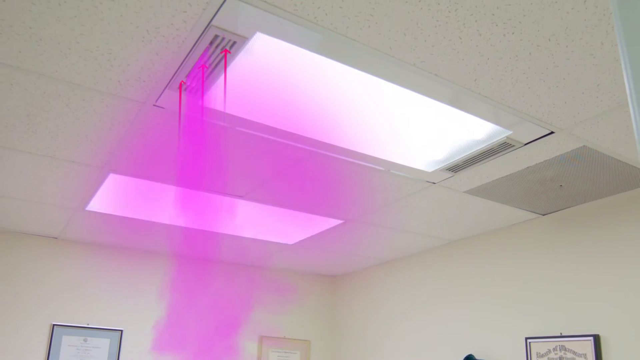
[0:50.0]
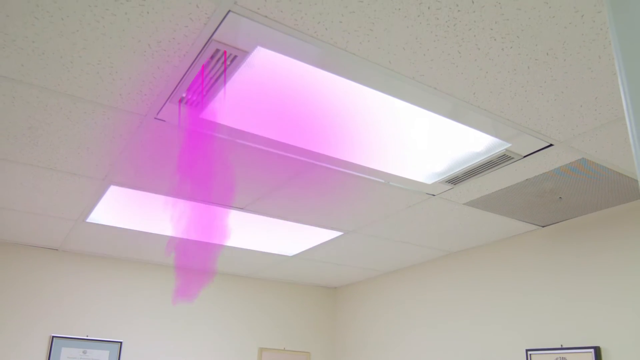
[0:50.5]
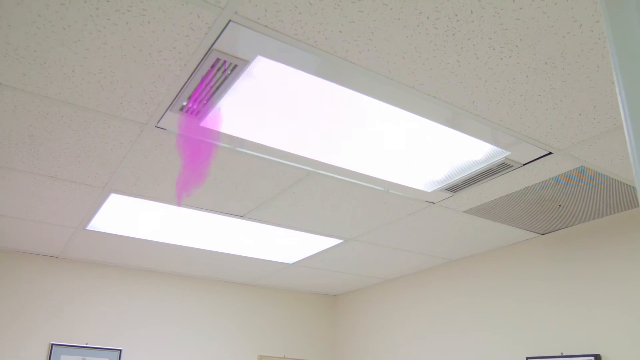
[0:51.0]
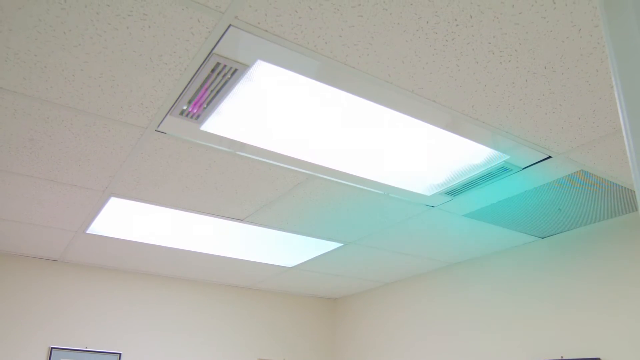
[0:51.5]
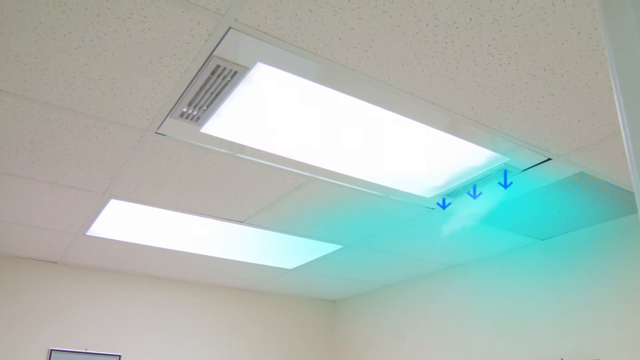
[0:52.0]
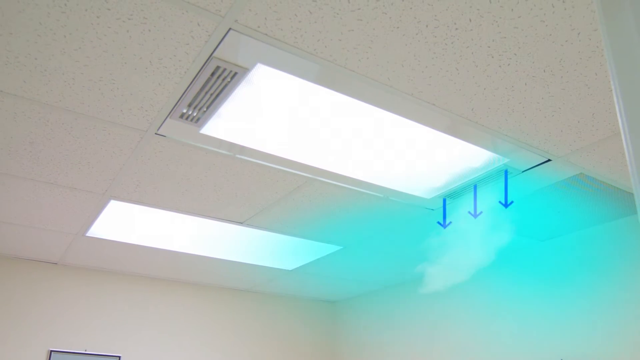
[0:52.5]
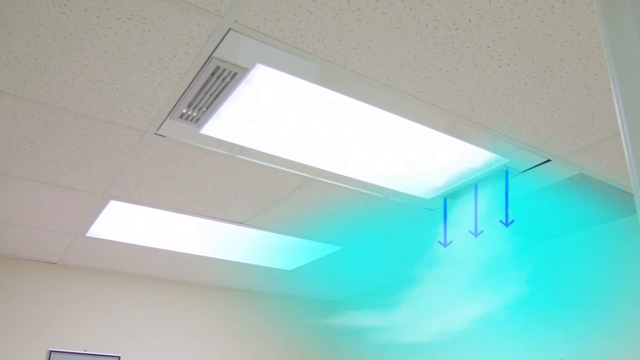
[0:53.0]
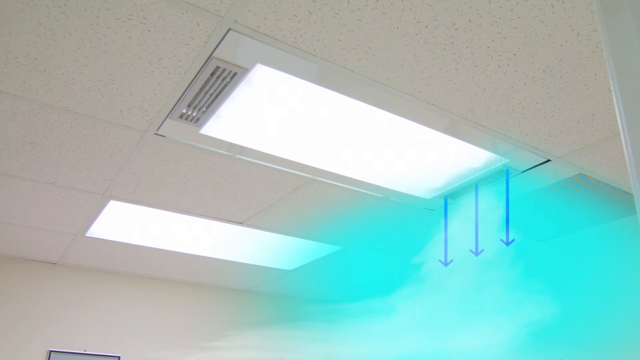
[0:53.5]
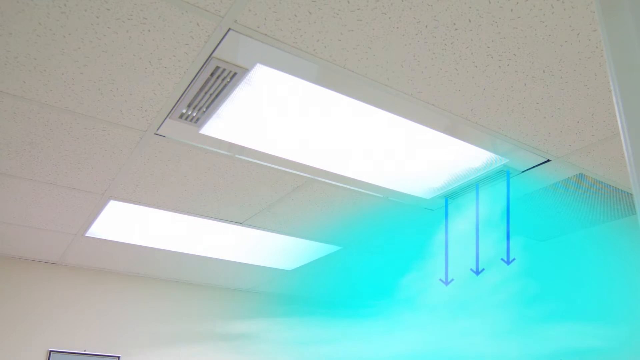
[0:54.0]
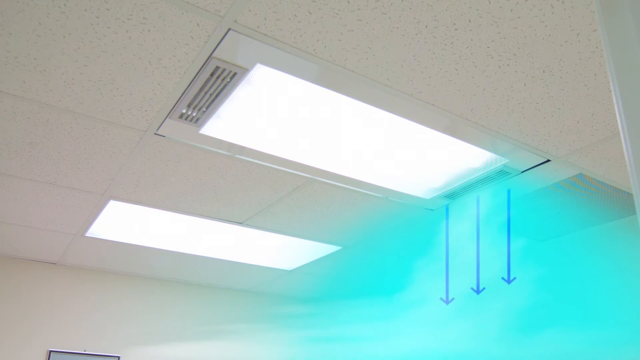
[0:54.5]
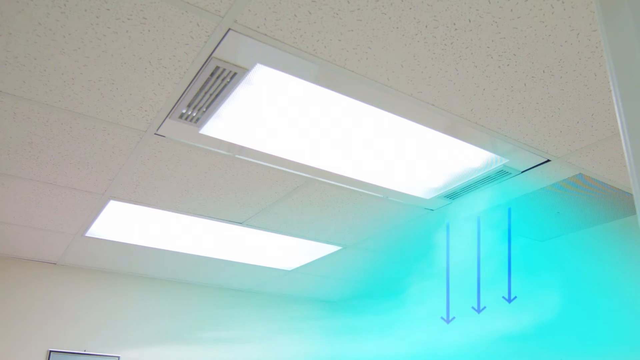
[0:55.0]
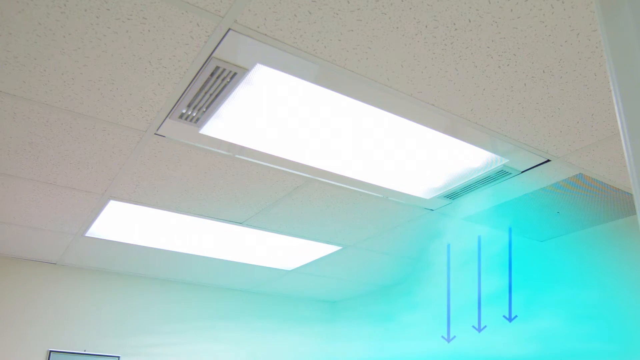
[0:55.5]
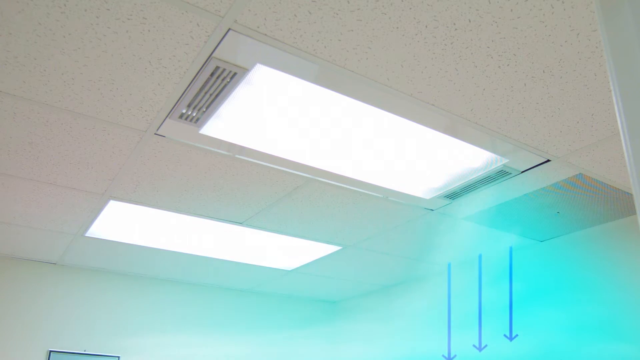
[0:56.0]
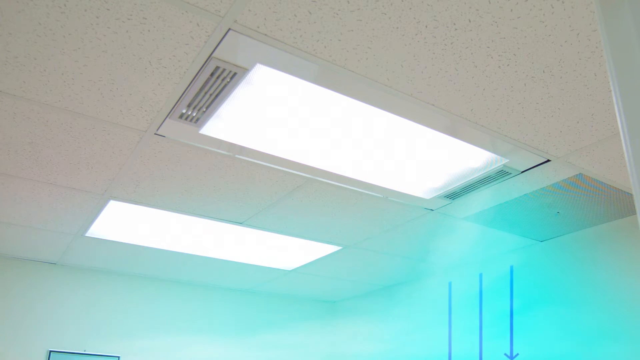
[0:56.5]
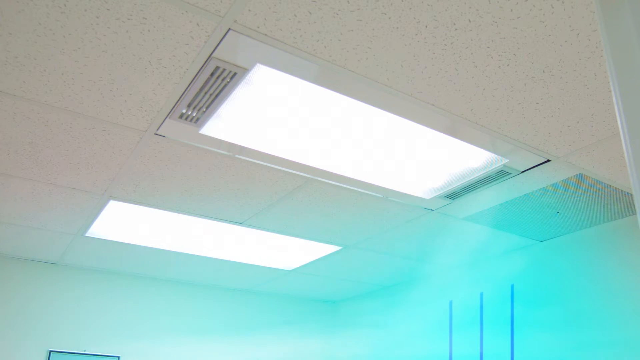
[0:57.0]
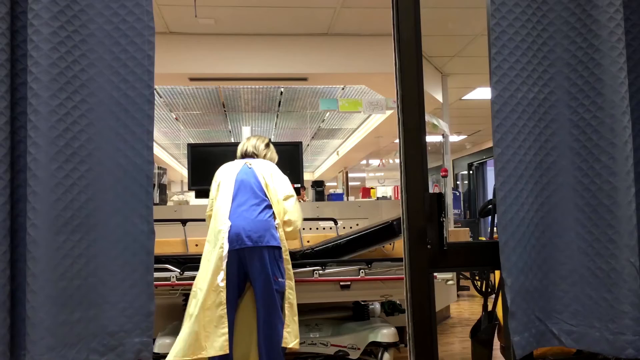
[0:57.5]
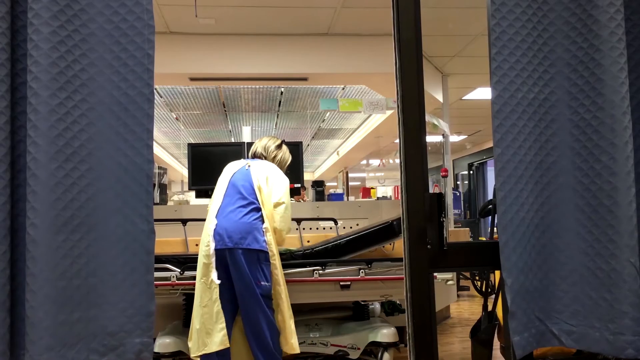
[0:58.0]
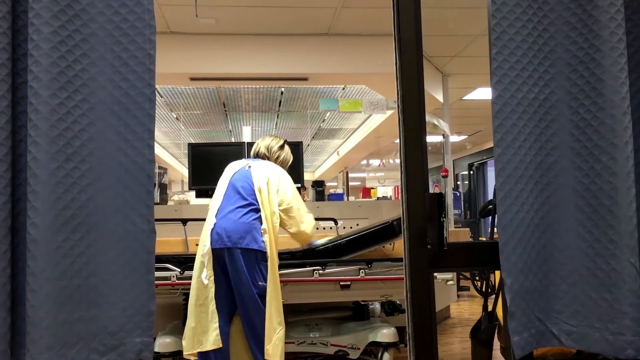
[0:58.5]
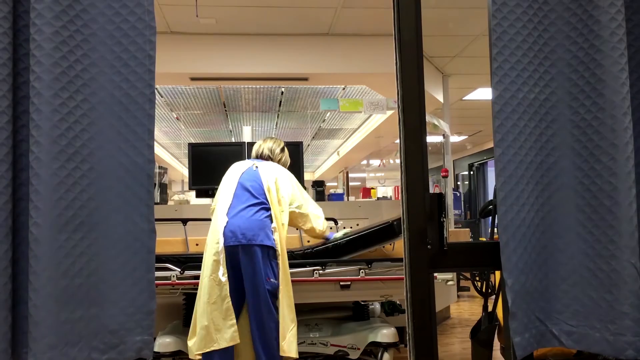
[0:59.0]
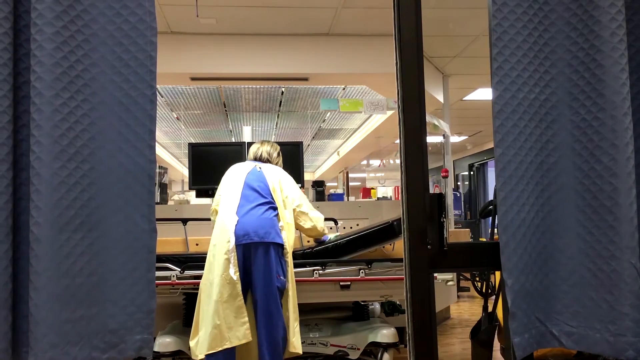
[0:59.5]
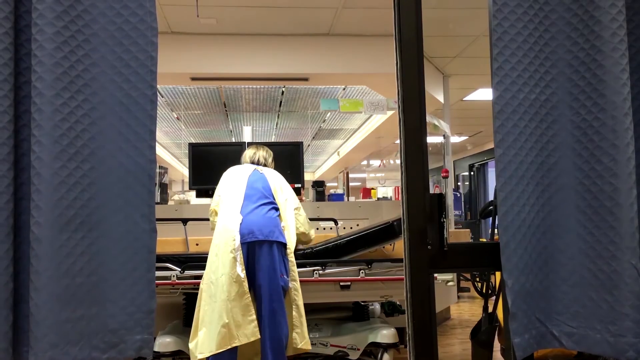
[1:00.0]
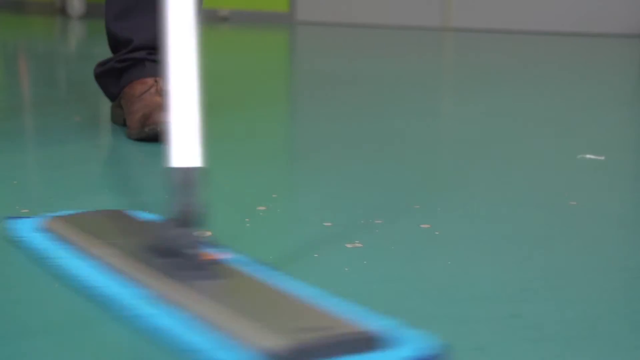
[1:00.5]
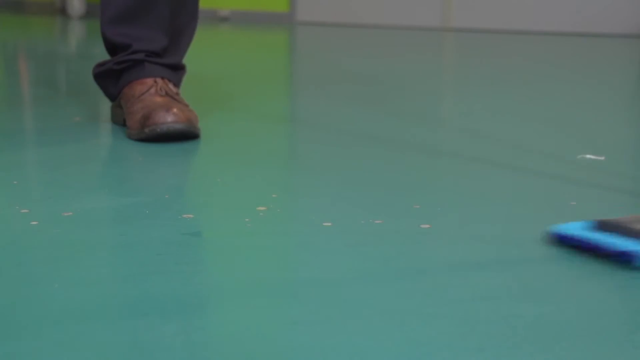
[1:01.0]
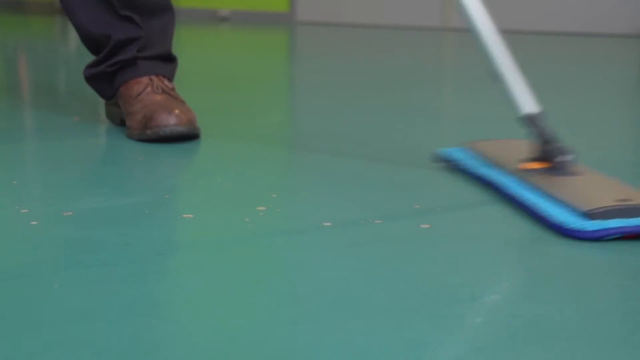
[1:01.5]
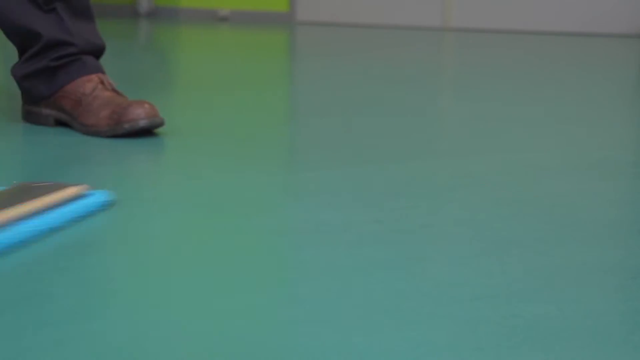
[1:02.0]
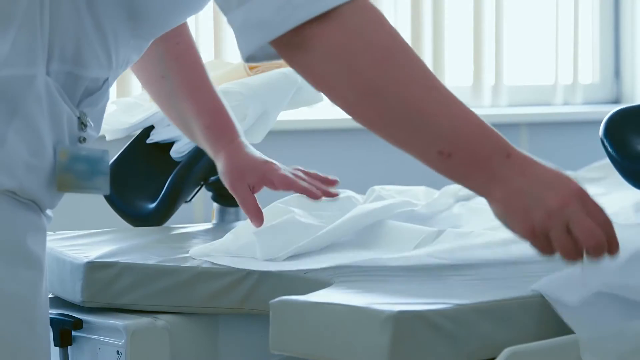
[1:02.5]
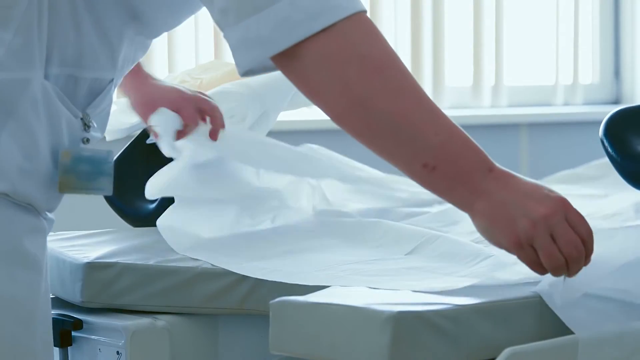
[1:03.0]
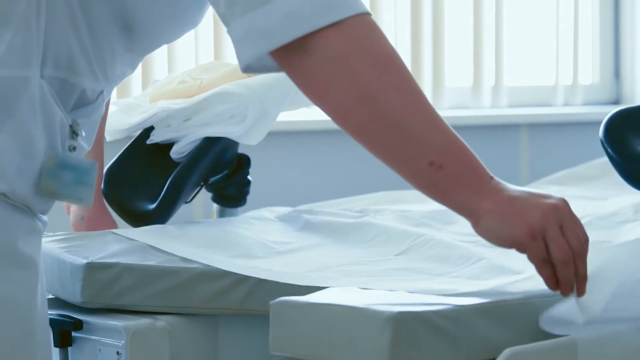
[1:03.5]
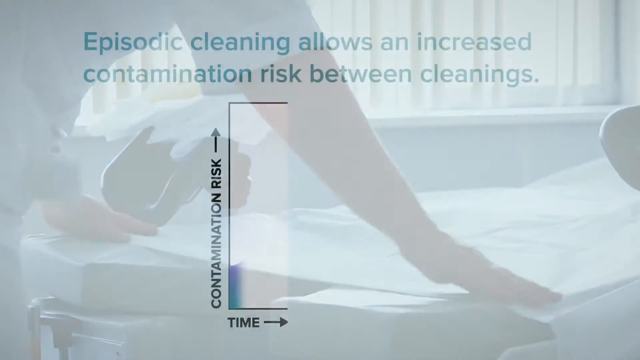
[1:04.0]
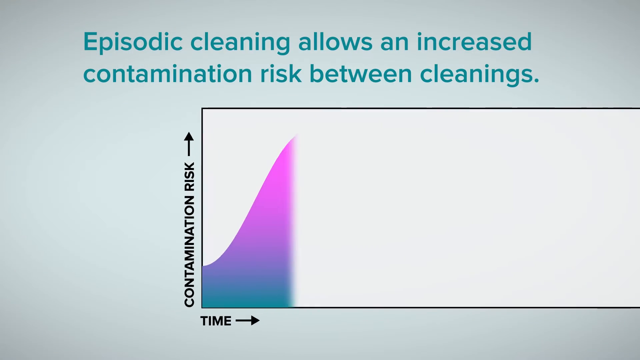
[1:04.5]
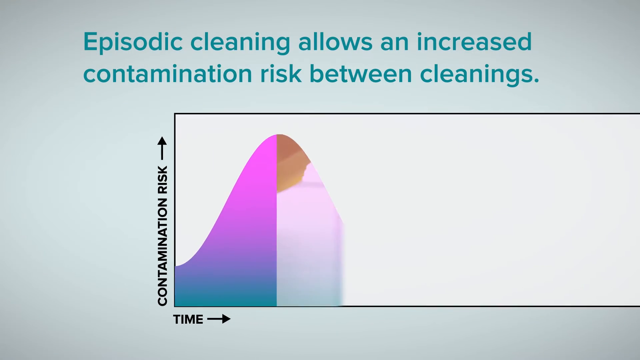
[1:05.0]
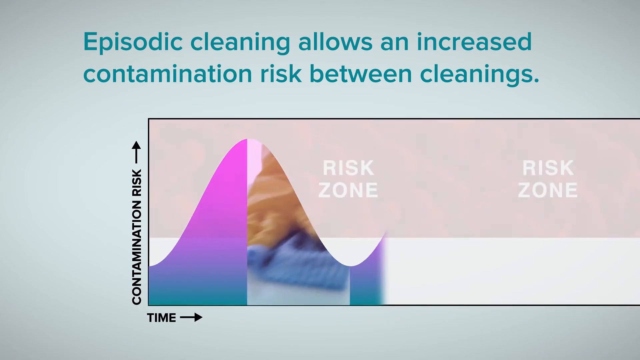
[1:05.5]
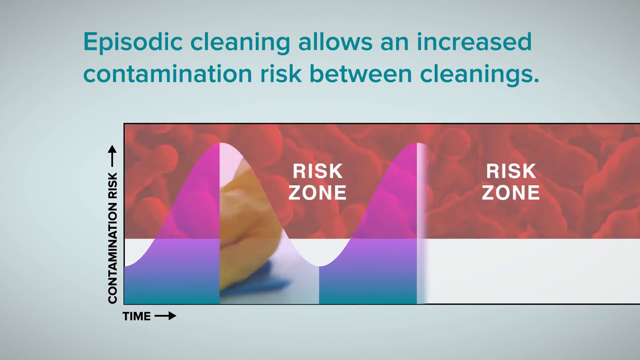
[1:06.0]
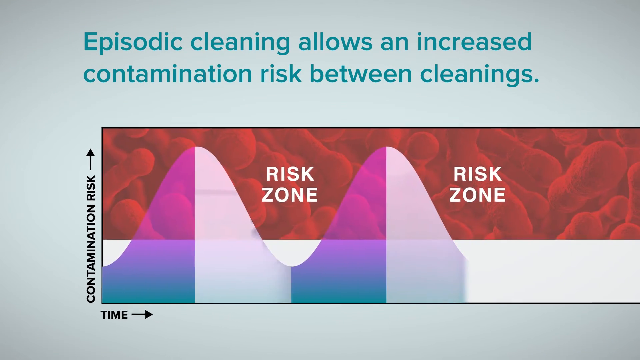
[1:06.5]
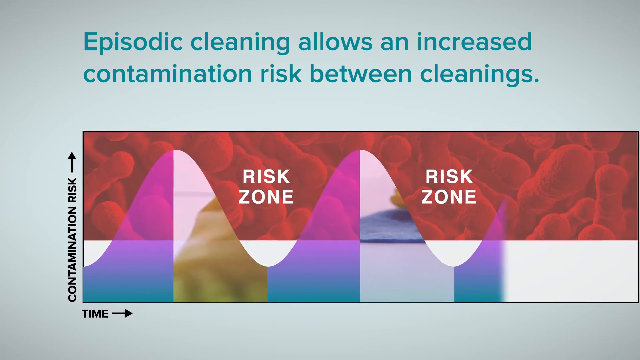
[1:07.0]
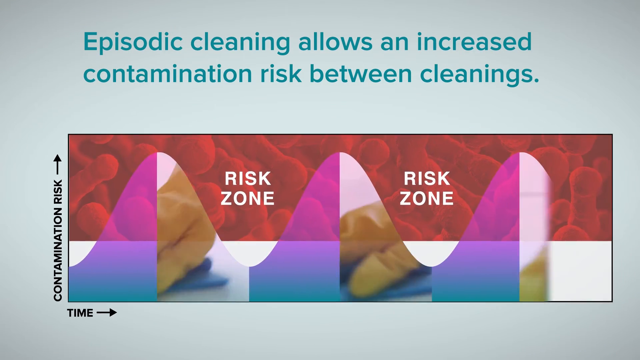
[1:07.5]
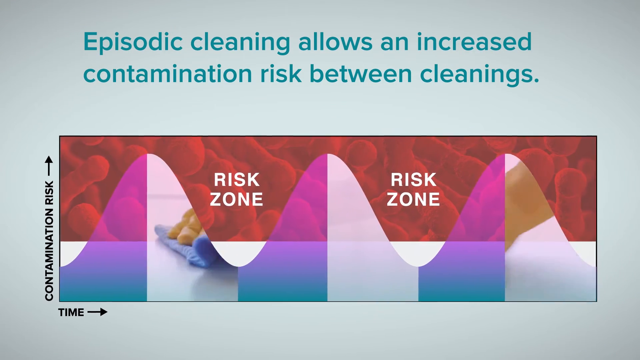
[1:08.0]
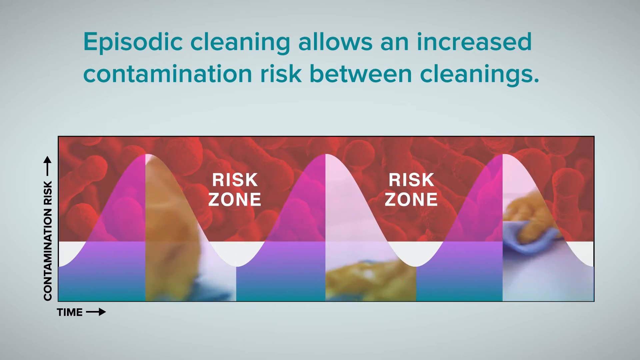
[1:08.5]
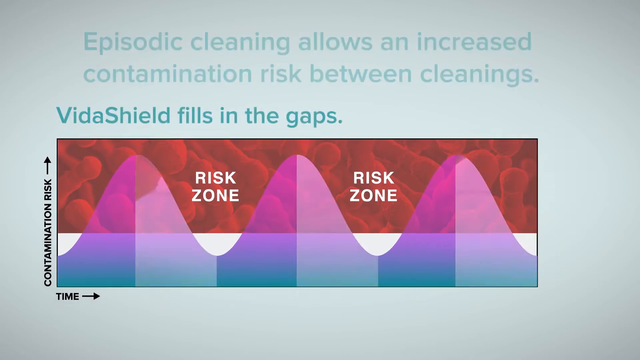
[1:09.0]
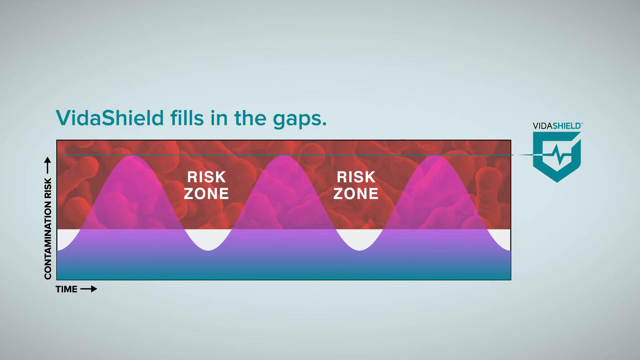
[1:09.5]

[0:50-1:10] The view focuses on the ceiling, where a little blue mist appears to come down from the light, and the smoke dissipates. Then a woman in blue scrubs scrubs down a patient's hospital bed, using what looks like a sponge or rag. Above her is some kind of glass panel with grooves and some post-its. Next, a man dust mops back and forth, and a man in some kind of white uniform folds towels or sheets. Text reads "contamination risk" and "episodic cleaning allows an increase in contamination risk between cleanings." A graph with a risk zone appears, animated with three sets of rises and falls, while someone scrubs in the background. A line suppresses the curve, showing that using VitaShield cuts the contamination down to what looks like about half.